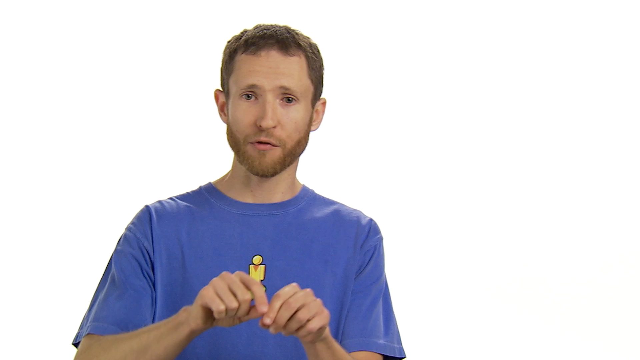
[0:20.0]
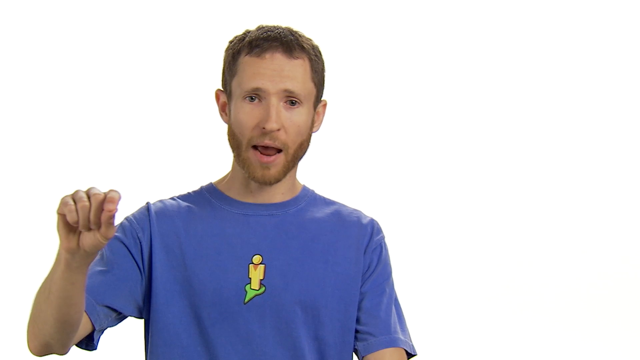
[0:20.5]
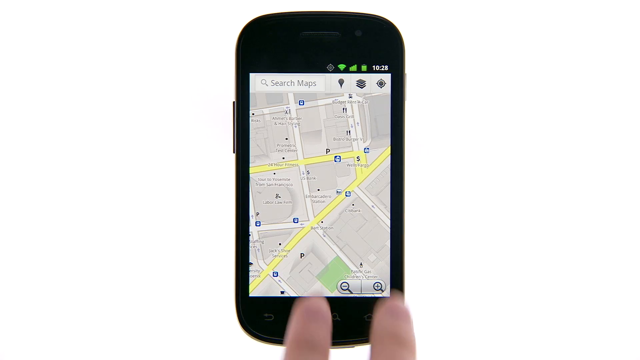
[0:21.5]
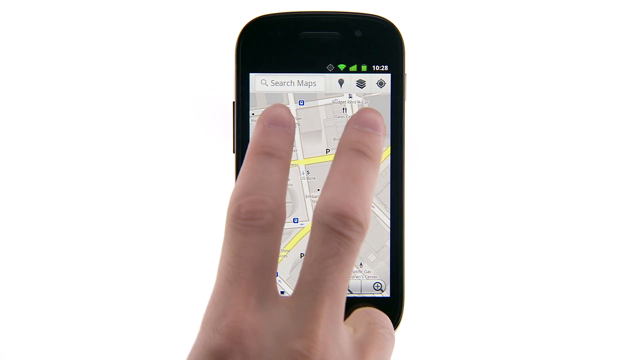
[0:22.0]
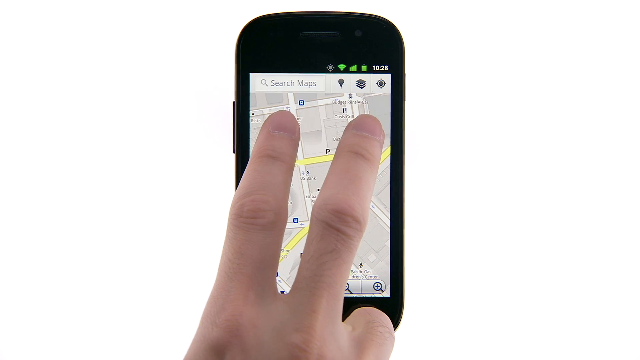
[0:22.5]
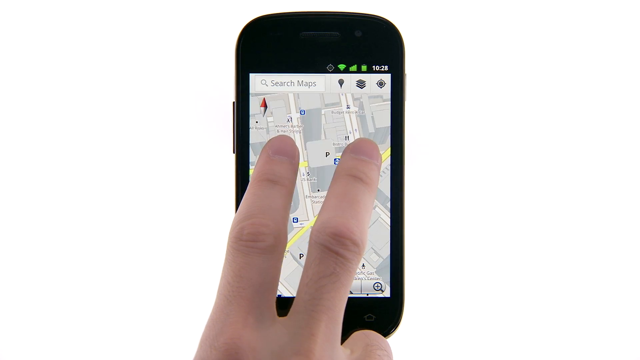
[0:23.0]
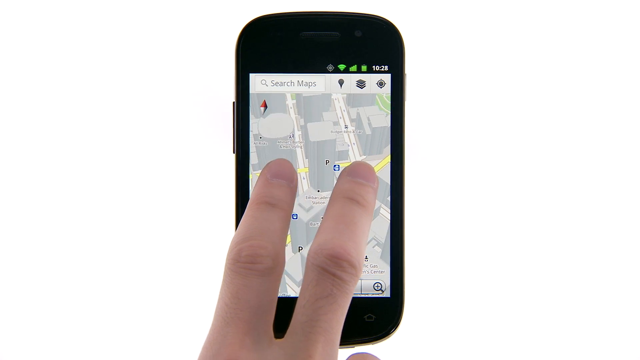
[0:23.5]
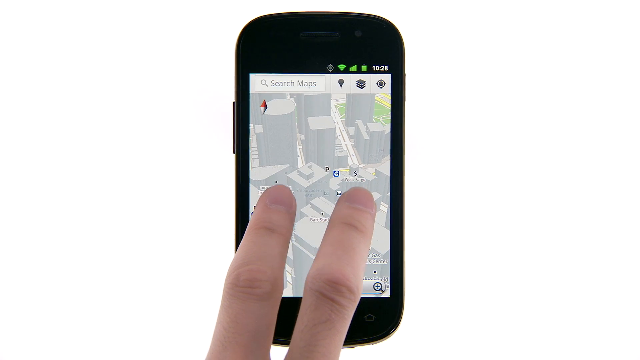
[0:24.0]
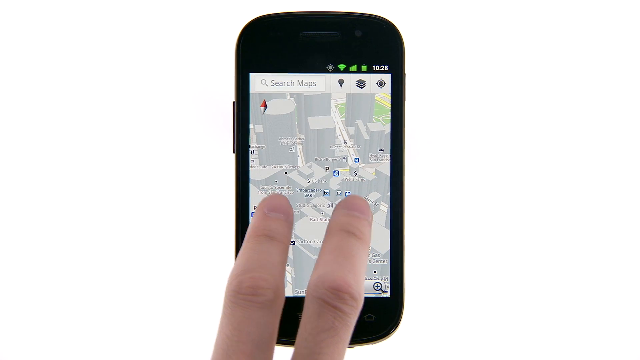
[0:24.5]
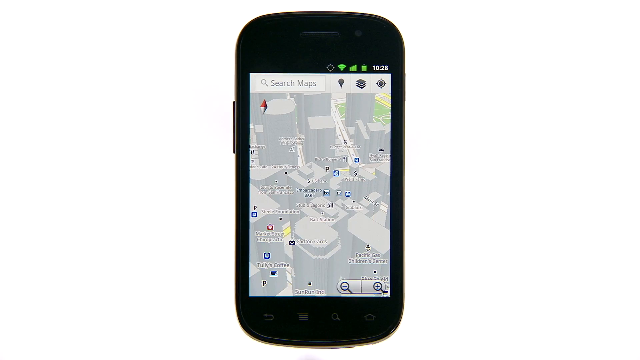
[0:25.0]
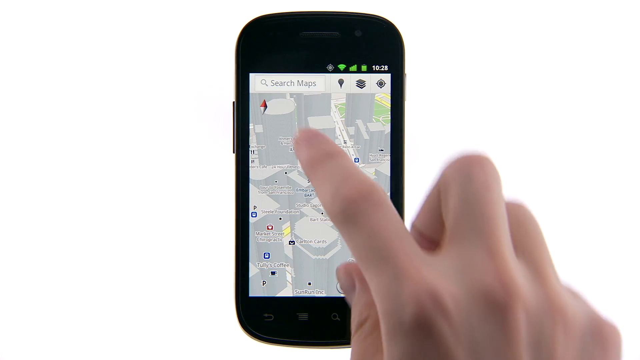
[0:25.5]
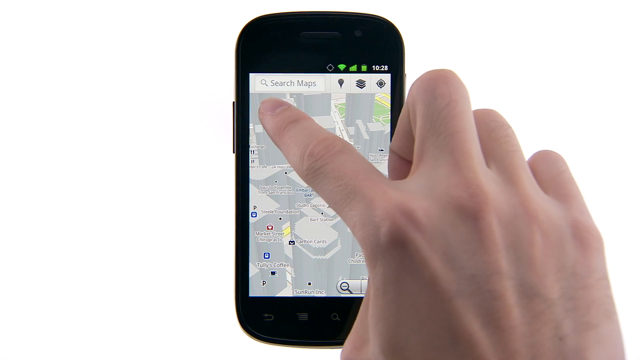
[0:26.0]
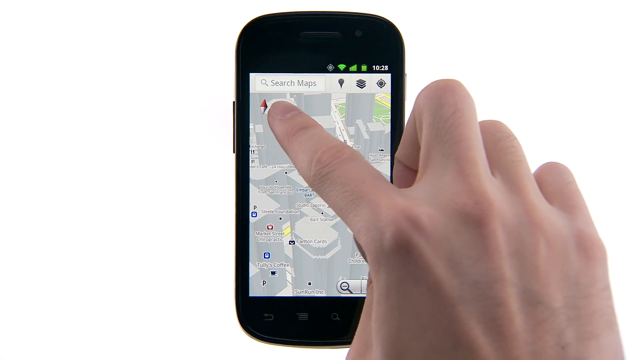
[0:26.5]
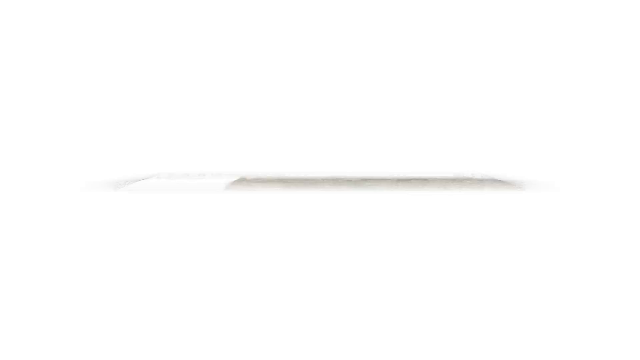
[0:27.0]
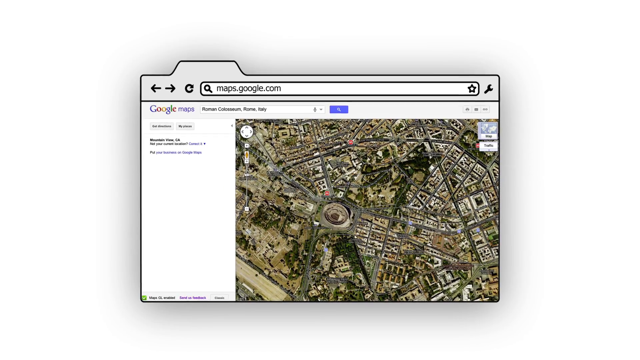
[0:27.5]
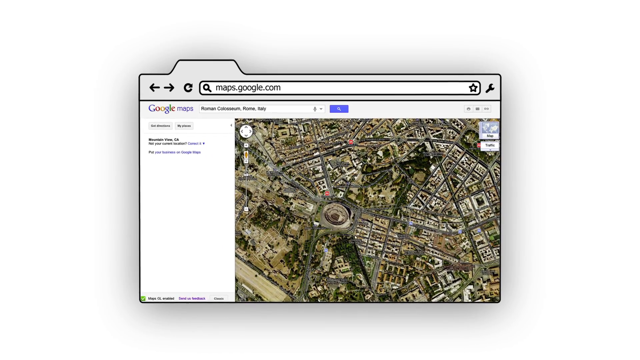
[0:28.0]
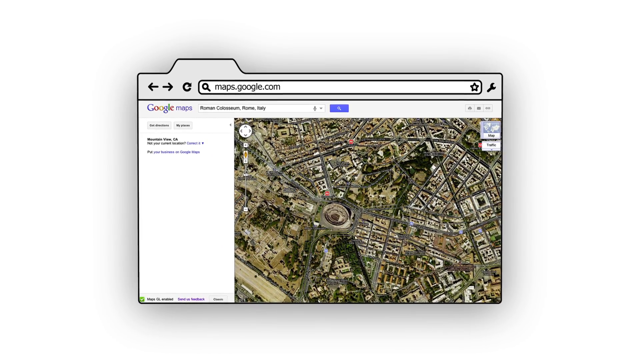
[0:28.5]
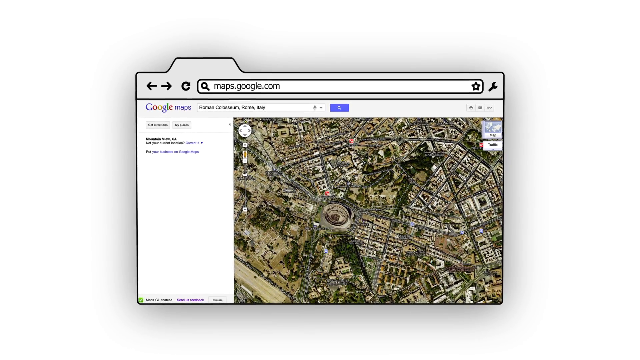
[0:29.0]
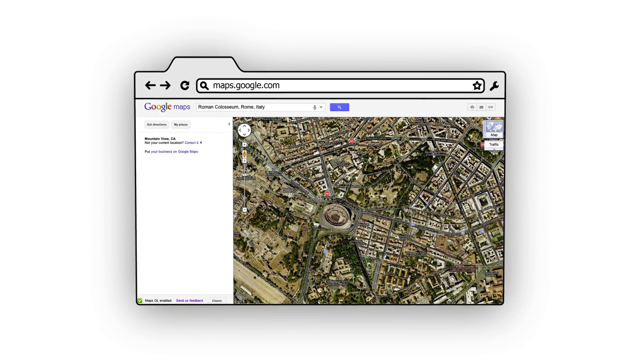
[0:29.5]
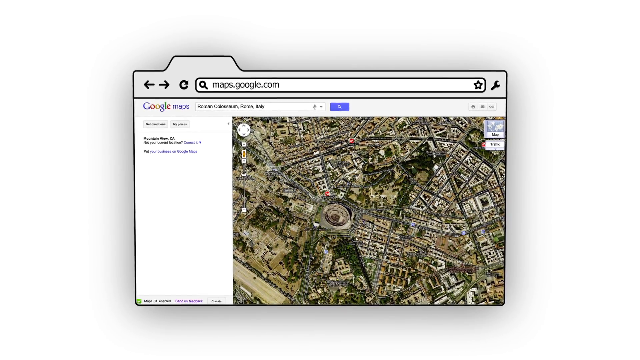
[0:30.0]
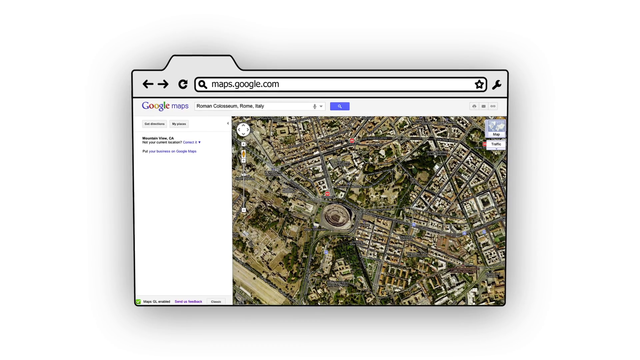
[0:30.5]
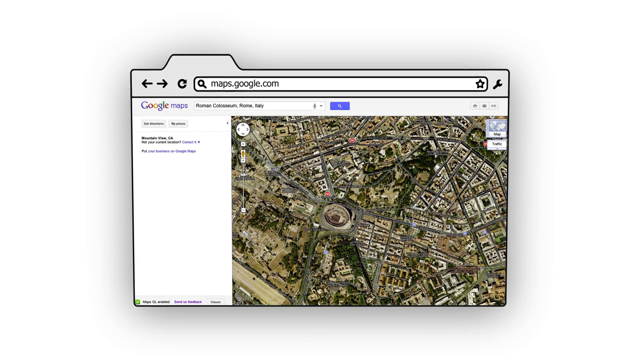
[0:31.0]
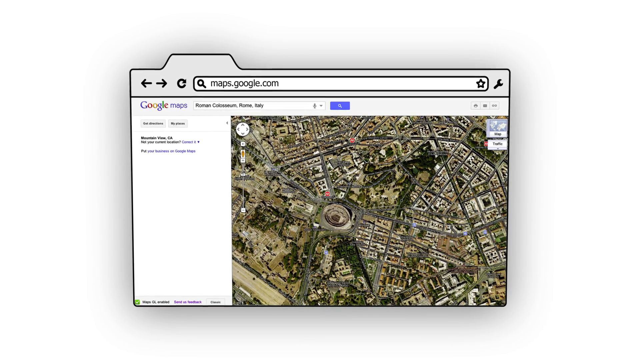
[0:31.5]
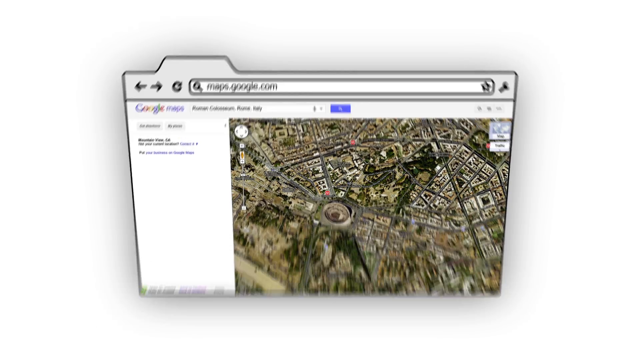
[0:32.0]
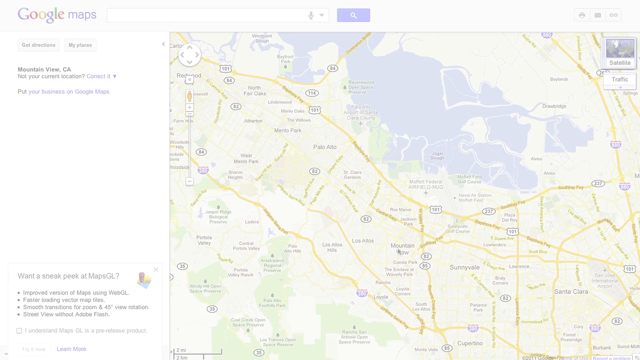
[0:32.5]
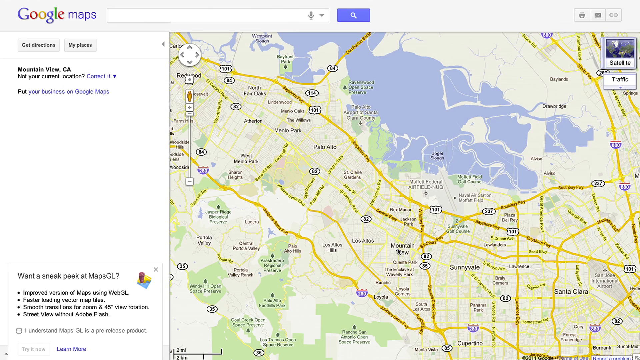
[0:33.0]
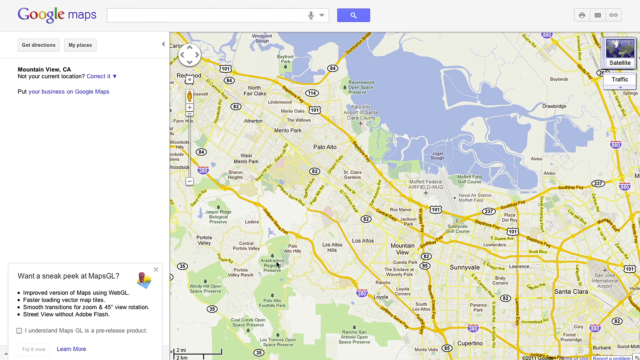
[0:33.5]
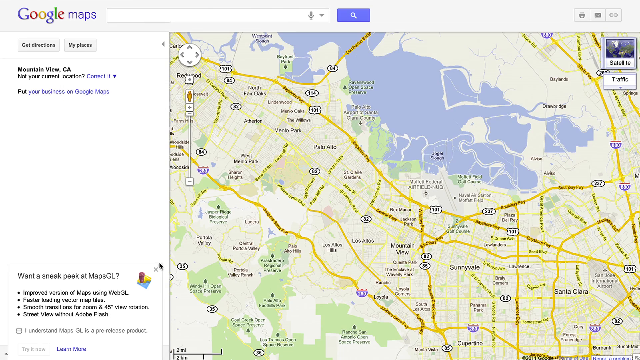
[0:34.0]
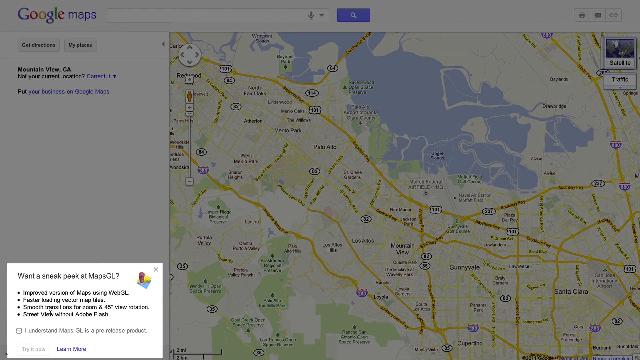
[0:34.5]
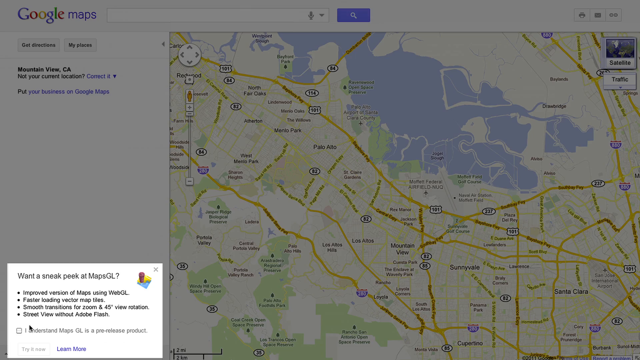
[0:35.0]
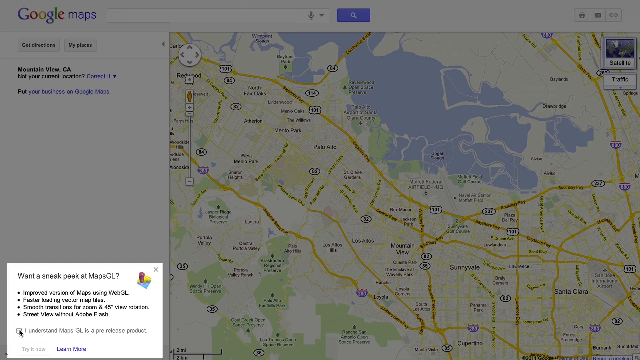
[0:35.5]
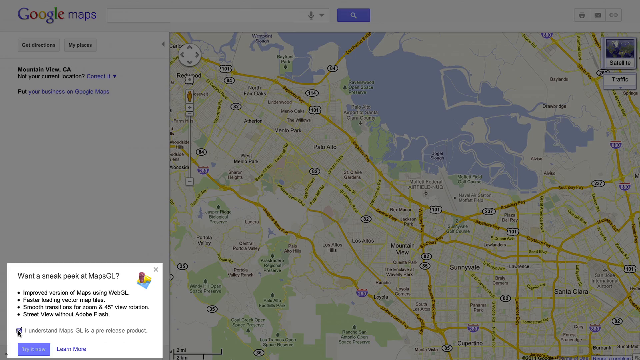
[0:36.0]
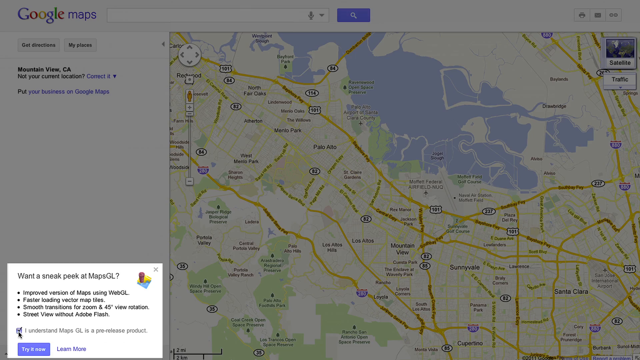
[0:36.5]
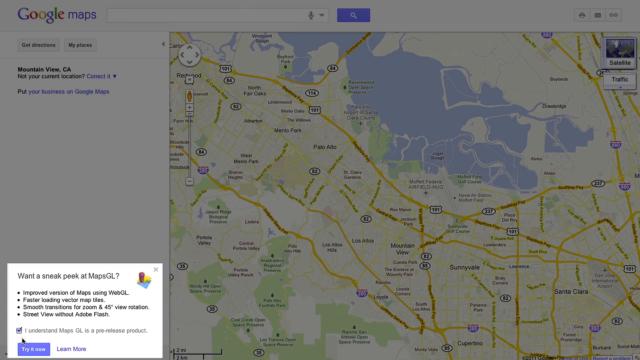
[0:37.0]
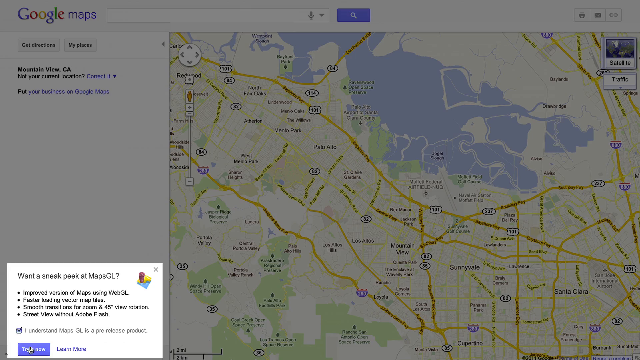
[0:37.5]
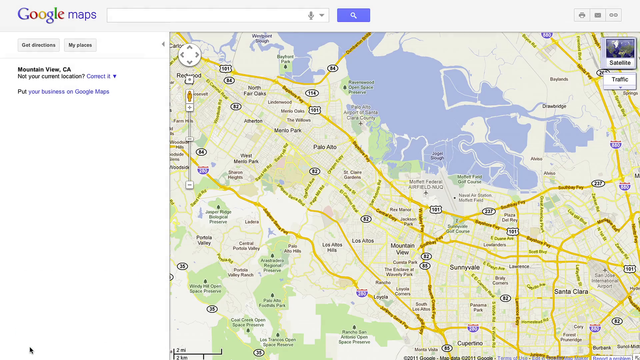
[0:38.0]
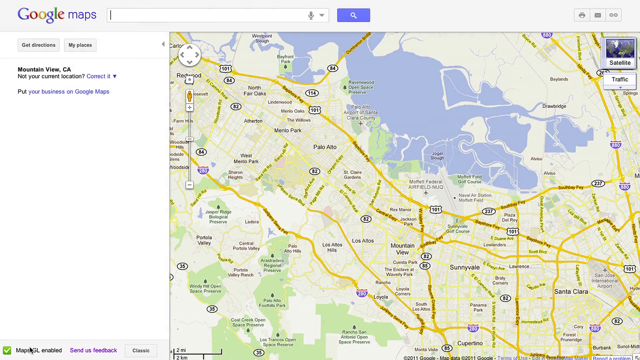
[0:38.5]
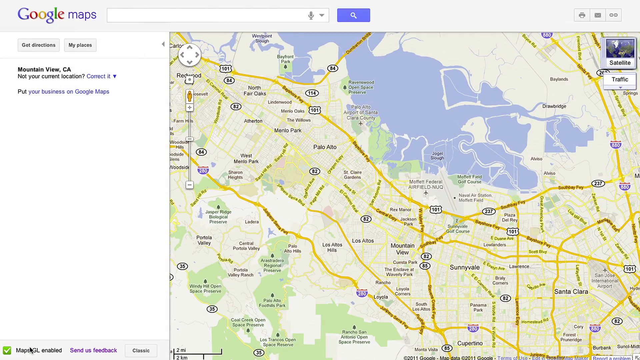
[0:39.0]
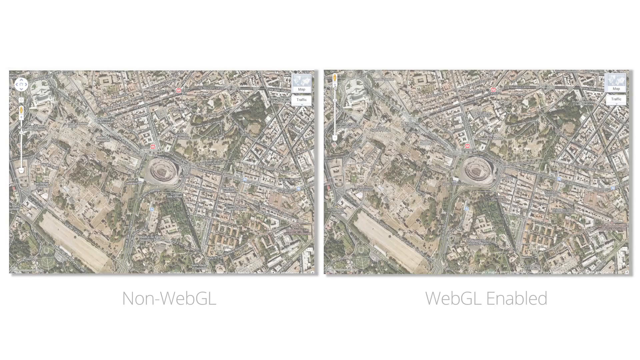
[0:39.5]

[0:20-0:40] The man is talking, and then the video shows a phone displaying Google Maps, with the man's fingers zooming in on it and changing the point of view between an overhead view of buildings and a view that is not overhead. Next comes a screen recording of regular Google Maps. A small pop-up appears in the corner stating that Google Maps WebGL is a pre-release product and asking the user to accept that there might be issues; the mouse clicks the "I understand" check mark. The screen then shows non-WebGL Google Maps and Google Maps with WebGL side by side to compare them, followed by a small image of Google Maps with the website and the tab on top.